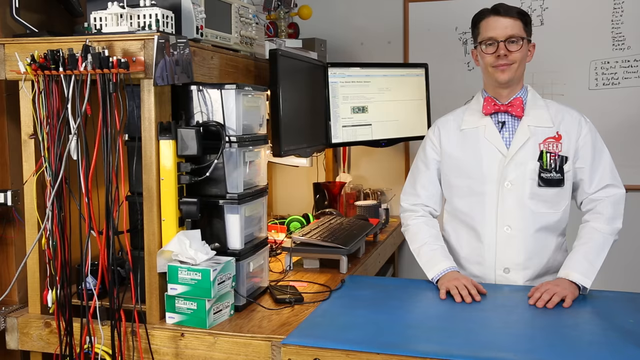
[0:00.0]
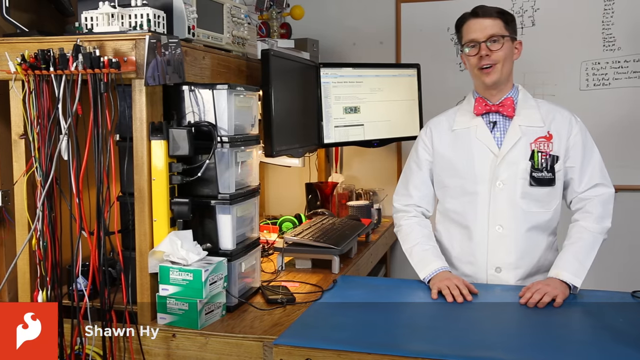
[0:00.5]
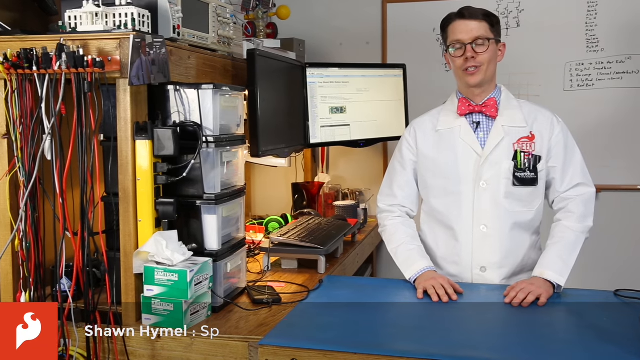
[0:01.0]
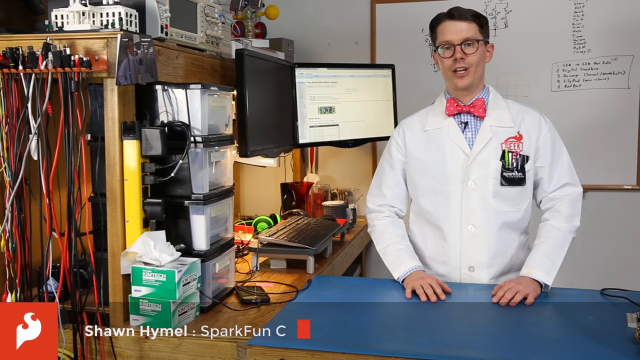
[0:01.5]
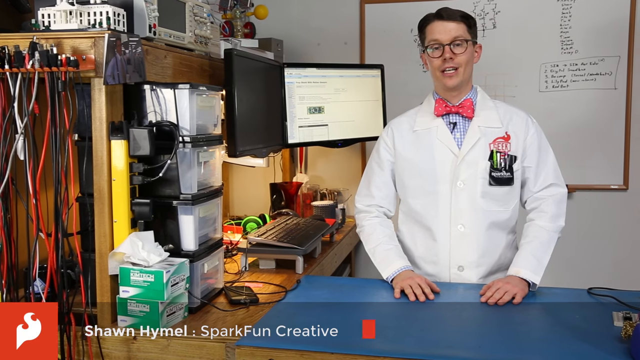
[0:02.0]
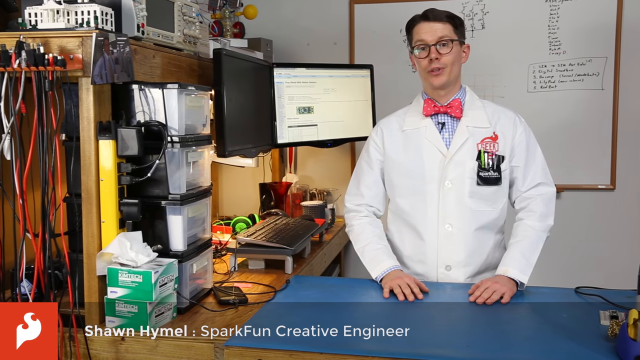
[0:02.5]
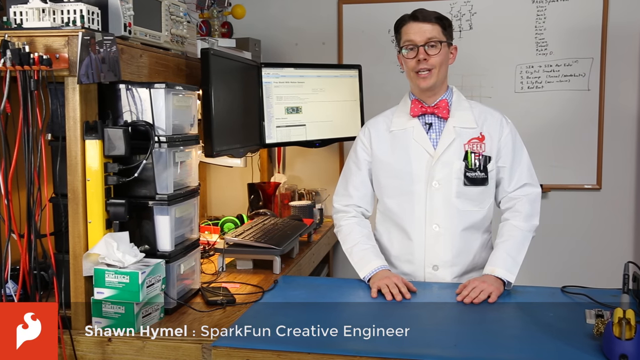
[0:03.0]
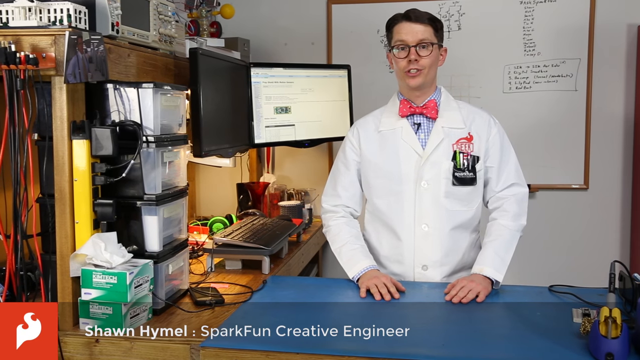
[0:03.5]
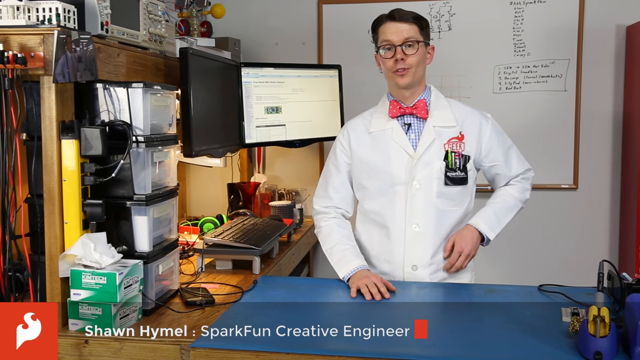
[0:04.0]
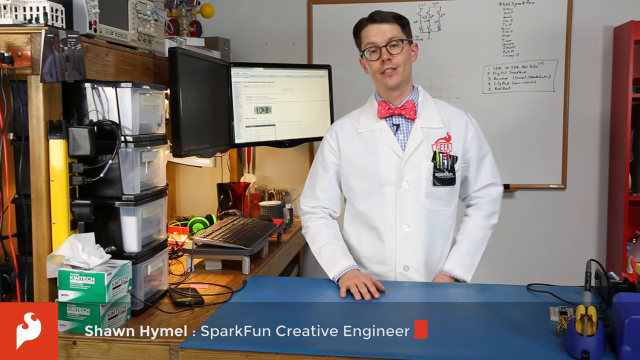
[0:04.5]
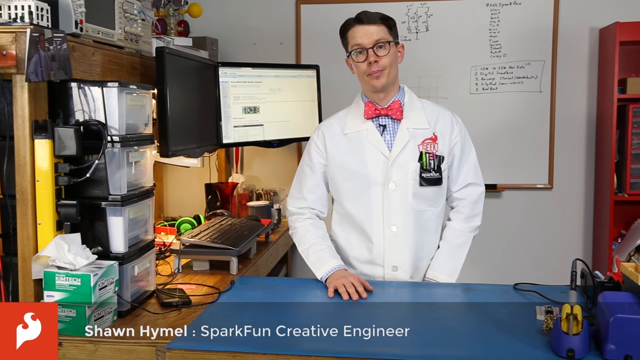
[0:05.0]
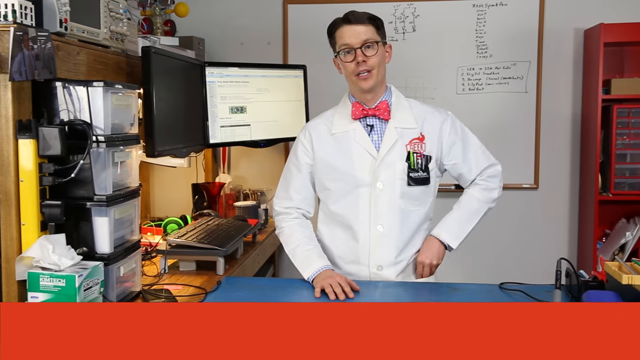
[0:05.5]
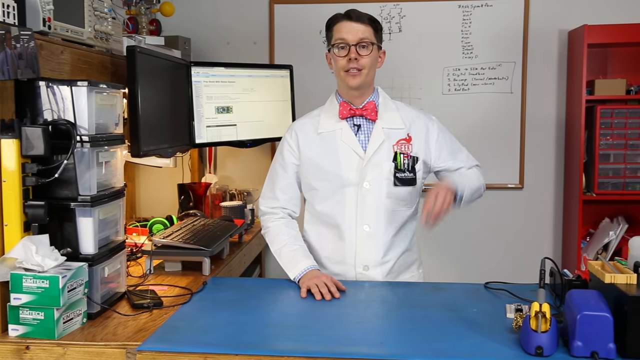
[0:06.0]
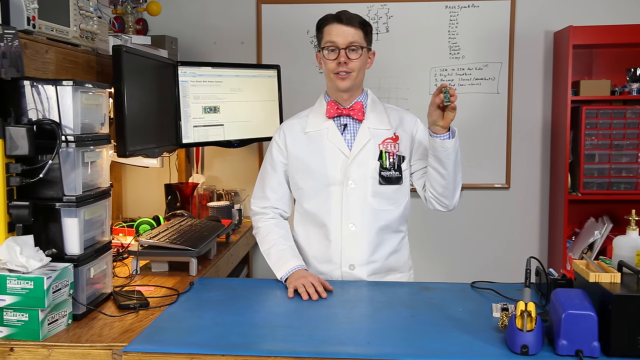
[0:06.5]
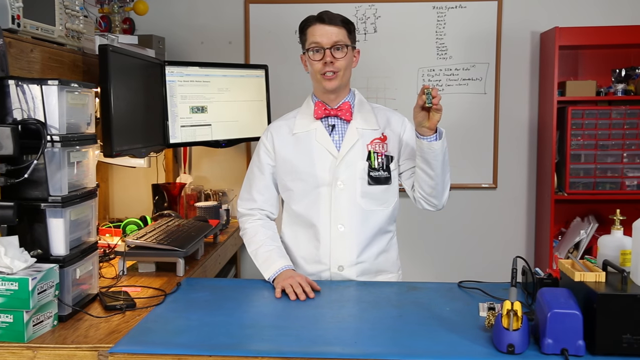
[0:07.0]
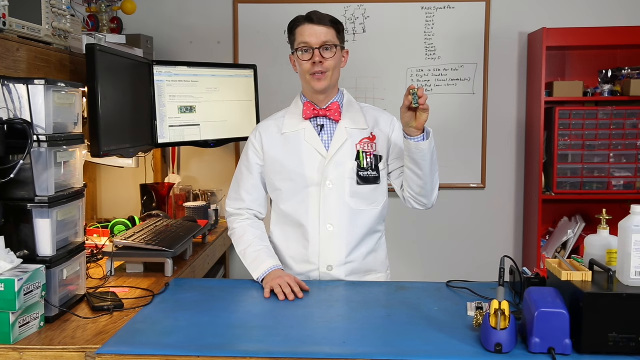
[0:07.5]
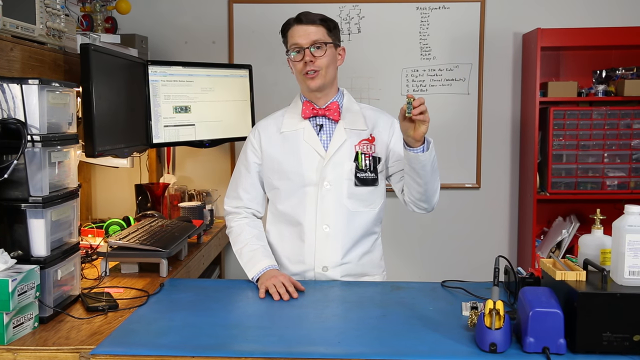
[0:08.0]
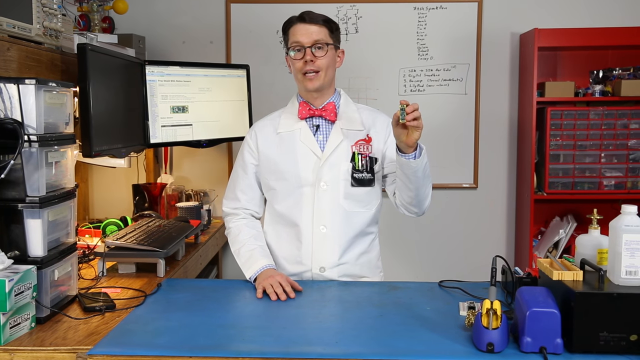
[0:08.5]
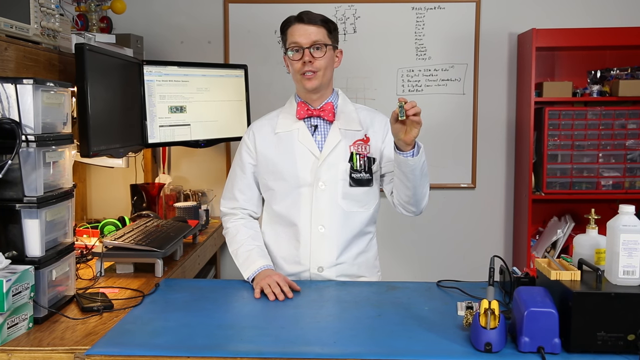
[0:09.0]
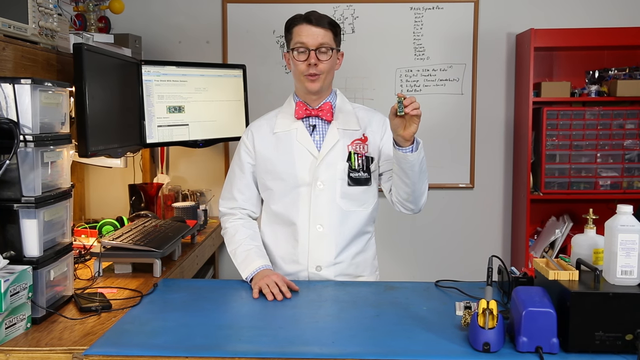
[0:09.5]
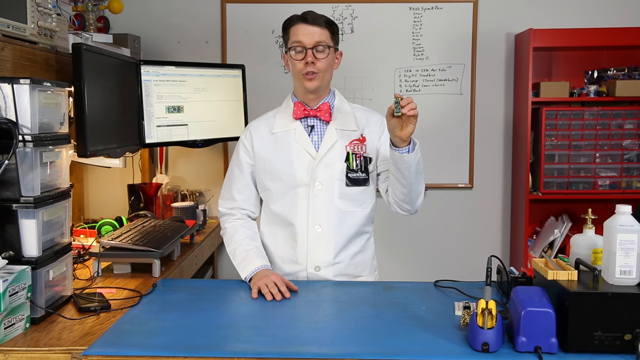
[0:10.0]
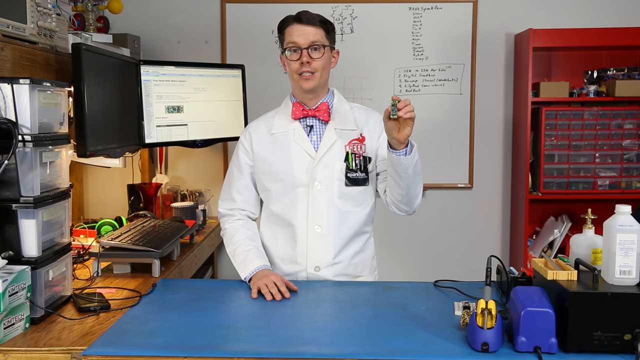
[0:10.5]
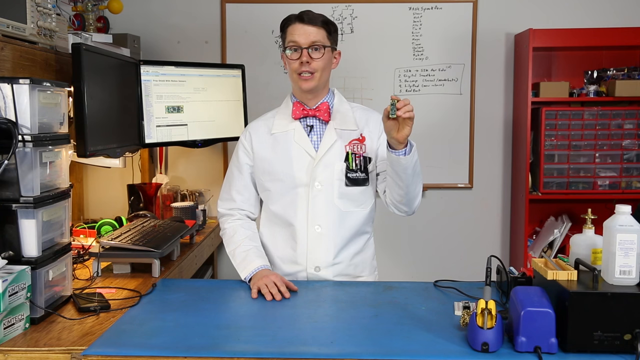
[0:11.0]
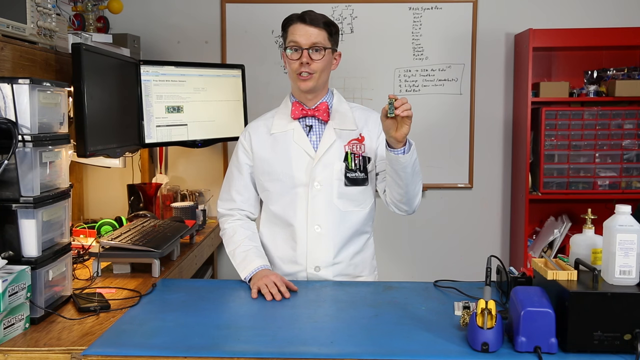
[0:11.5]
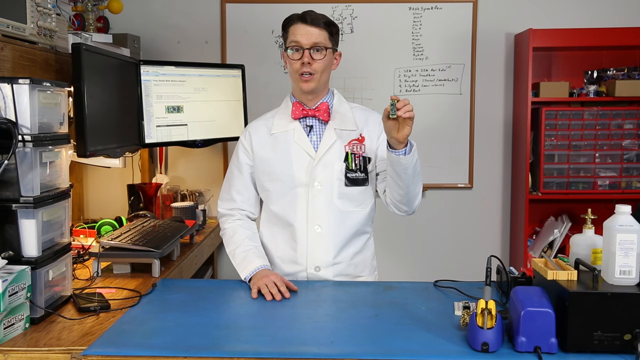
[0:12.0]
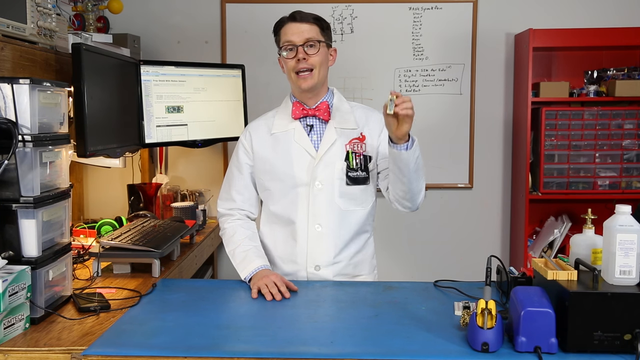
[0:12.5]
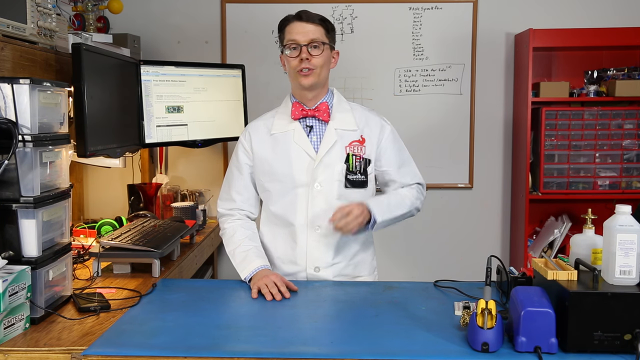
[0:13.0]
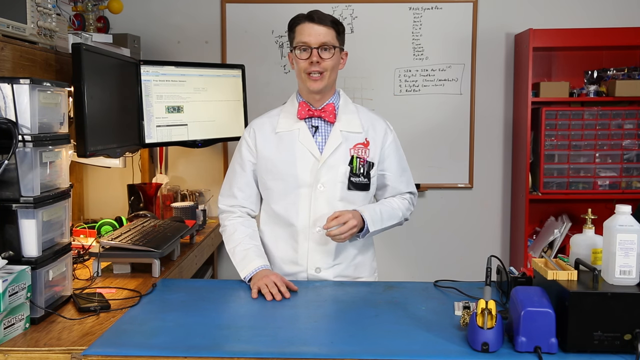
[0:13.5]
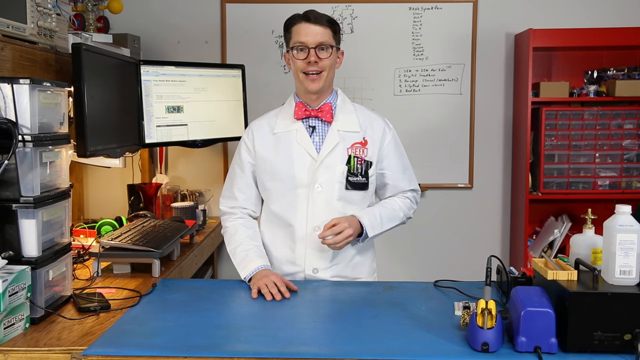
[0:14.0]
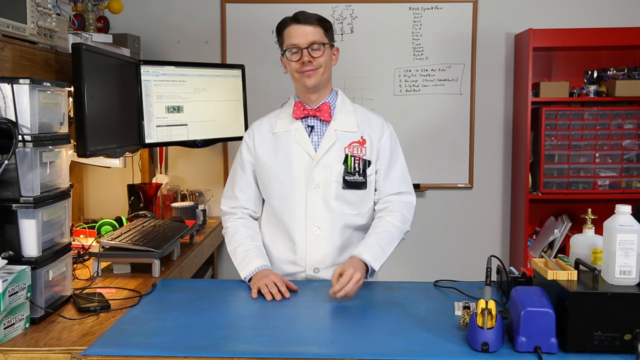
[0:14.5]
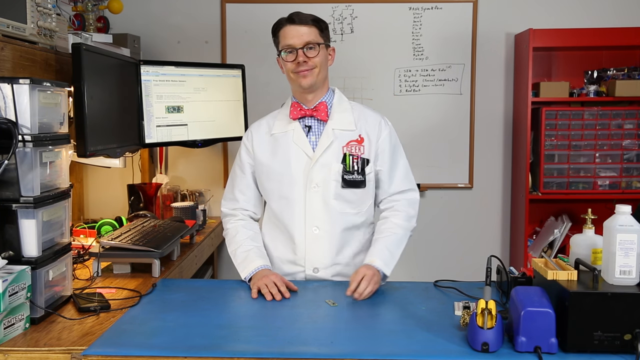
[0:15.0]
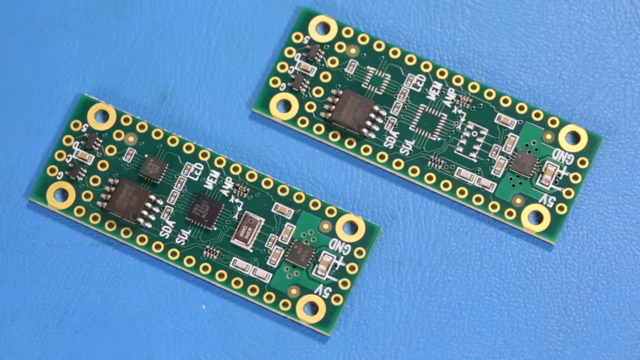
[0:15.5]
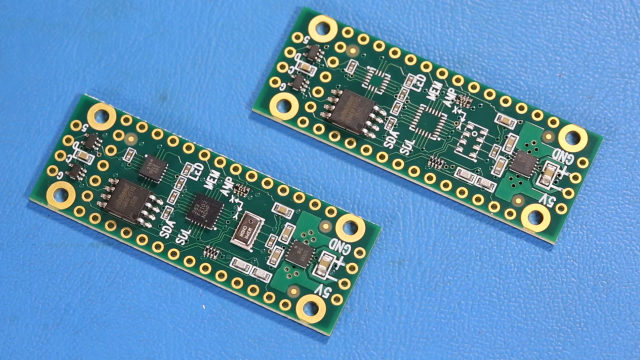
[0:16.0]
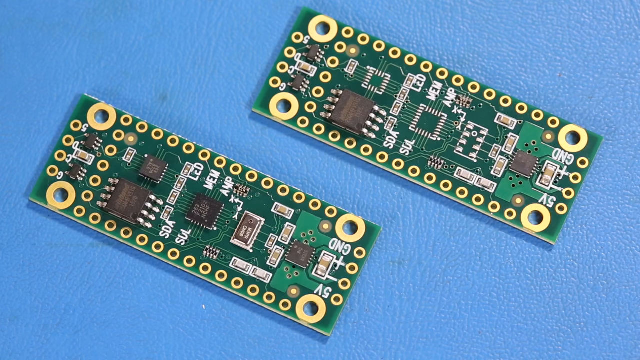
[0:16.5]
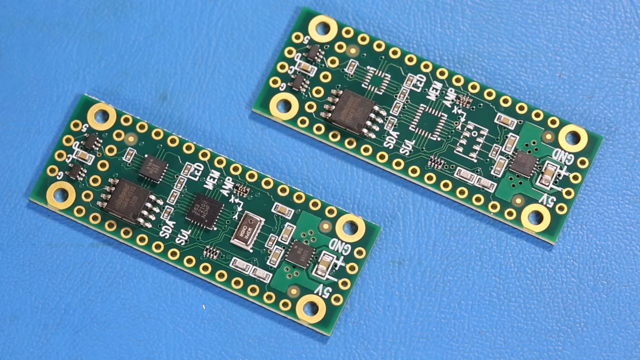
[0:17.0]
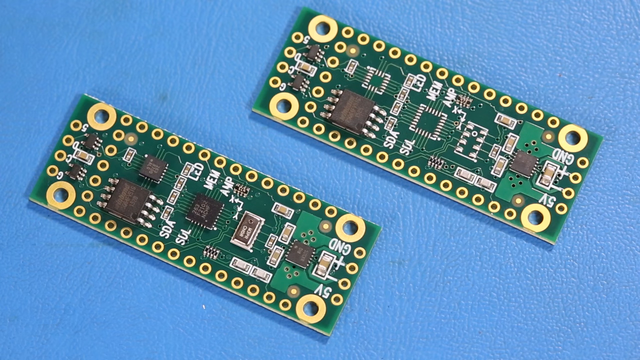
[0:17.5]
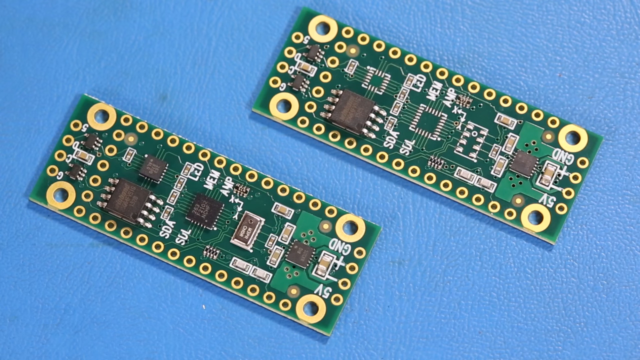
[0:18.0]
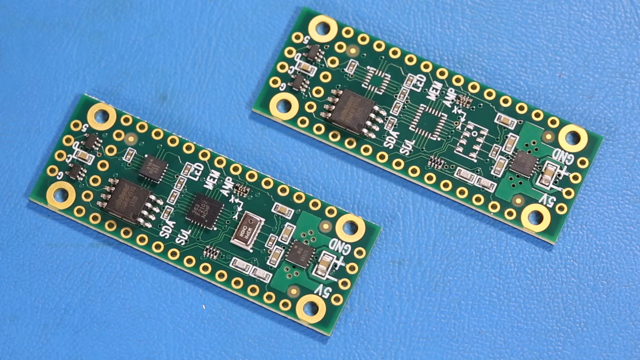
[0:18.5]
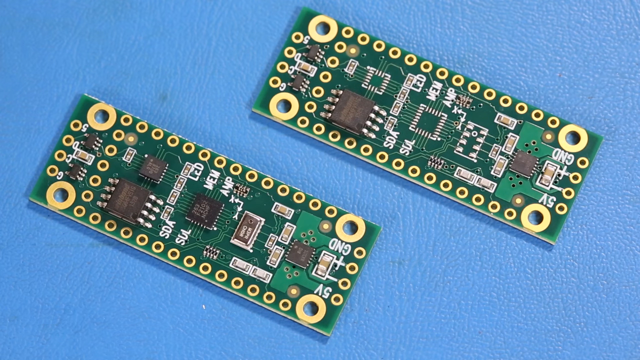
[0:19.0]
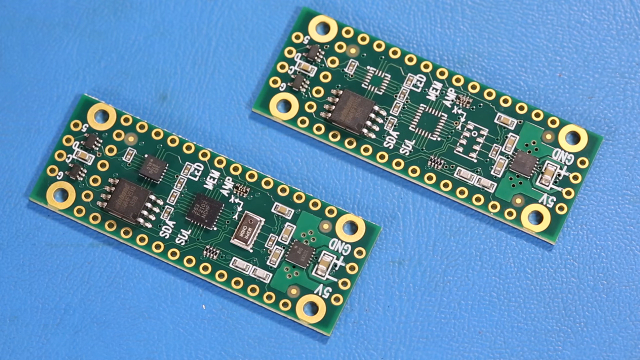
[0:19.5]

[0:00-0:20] The camera pans to the right, revealing a scientist in a white lab coat with a pocket protector, a gingham-patterned shirt and a pink bow tie. He is a white male wearing glasses, with very nerdy-looking parted brown hair. In front of him is a blue table. Behind him to the right is a red shelf, and on his other side is a dual monitor, with a coffee cup underneath. There is also a keyboard, a four-bin storage unit and two packs of tissue paper on a very messy desk. The man starts talking, pulls some microchips out of his pocket and puts them on the table, and the microchips are then seen up close.